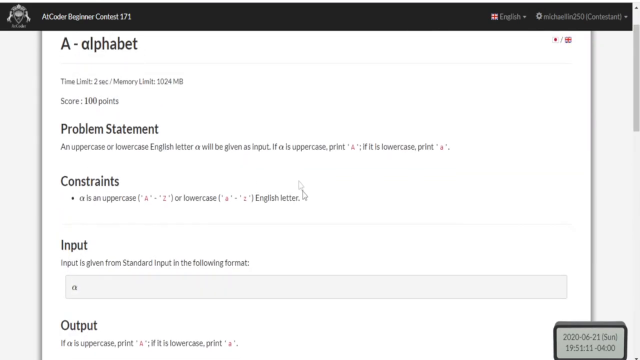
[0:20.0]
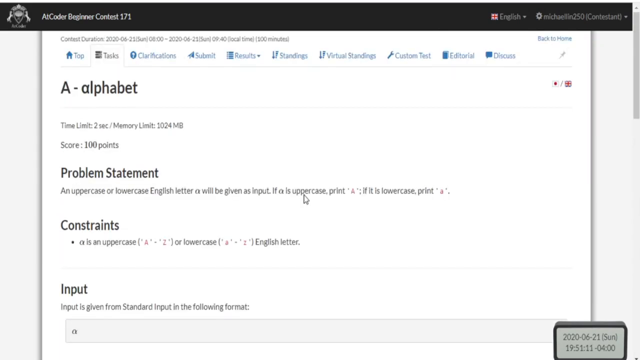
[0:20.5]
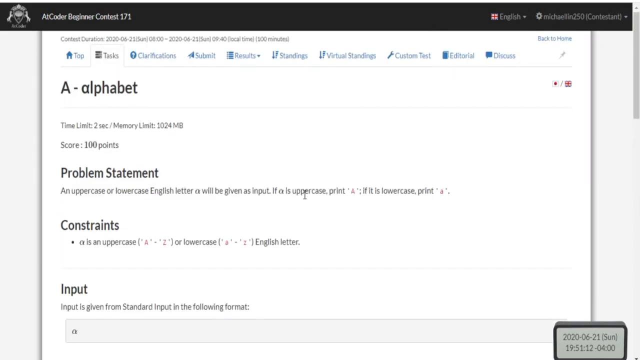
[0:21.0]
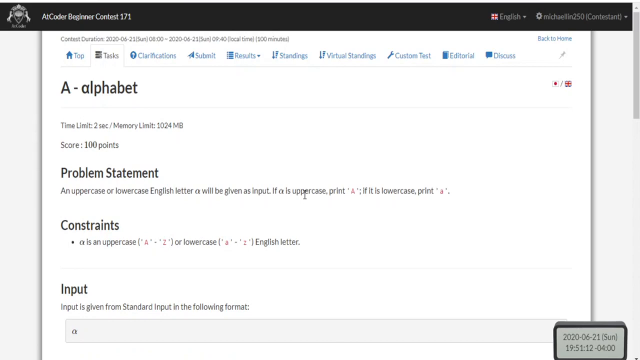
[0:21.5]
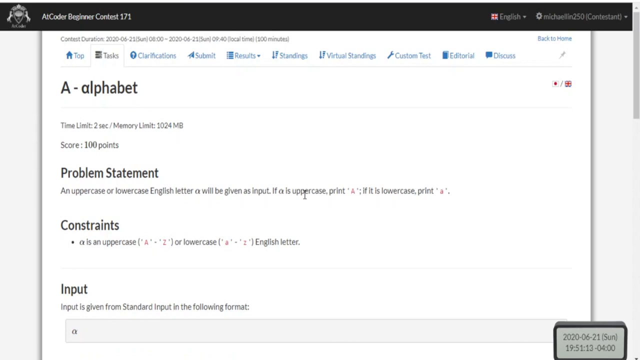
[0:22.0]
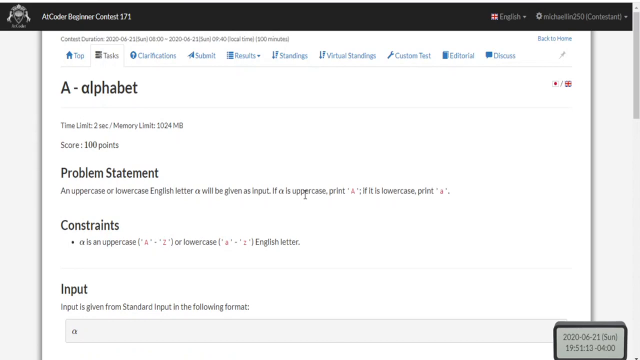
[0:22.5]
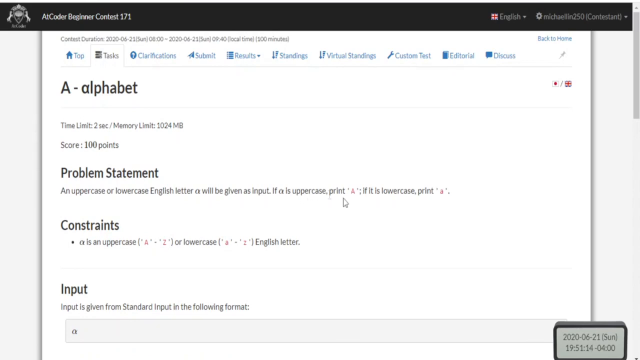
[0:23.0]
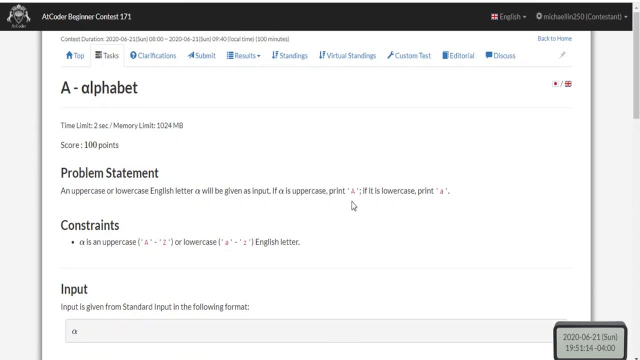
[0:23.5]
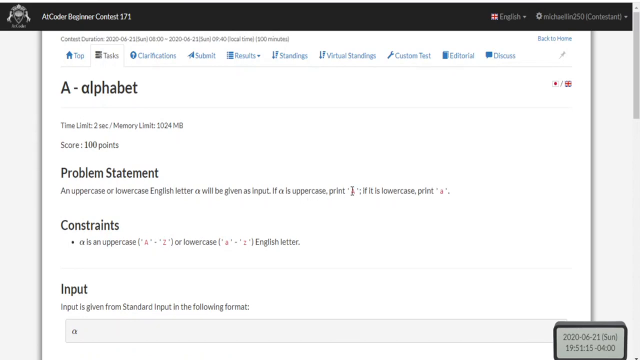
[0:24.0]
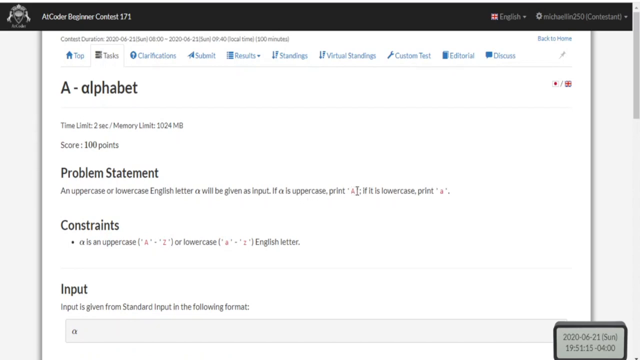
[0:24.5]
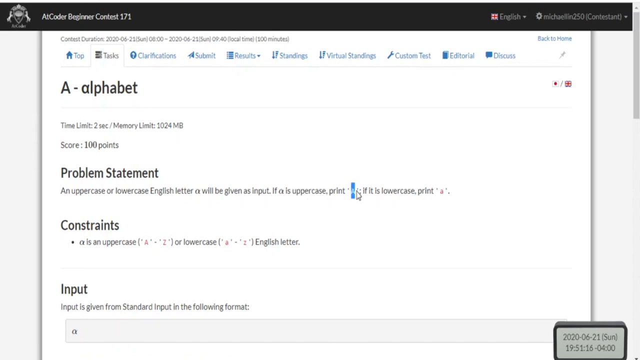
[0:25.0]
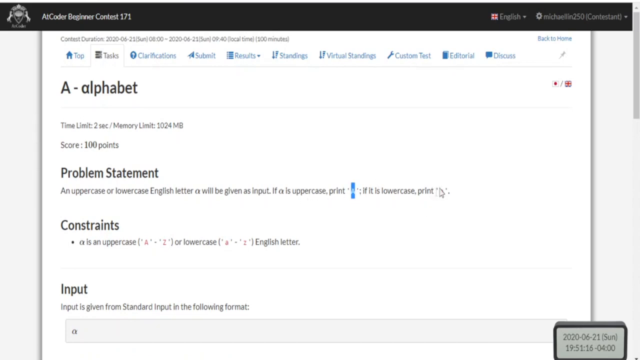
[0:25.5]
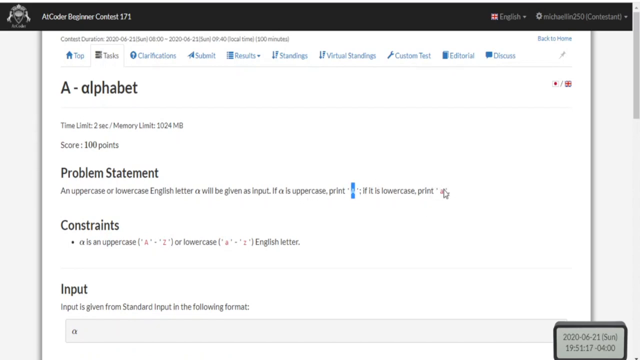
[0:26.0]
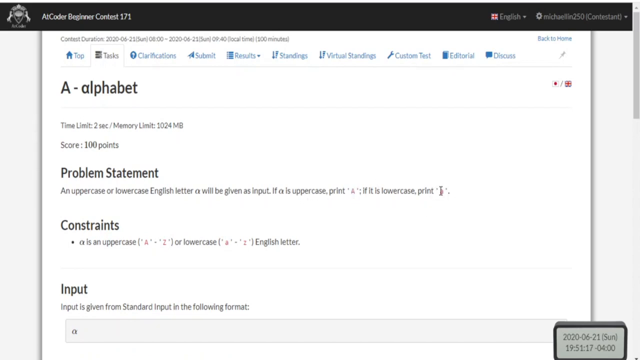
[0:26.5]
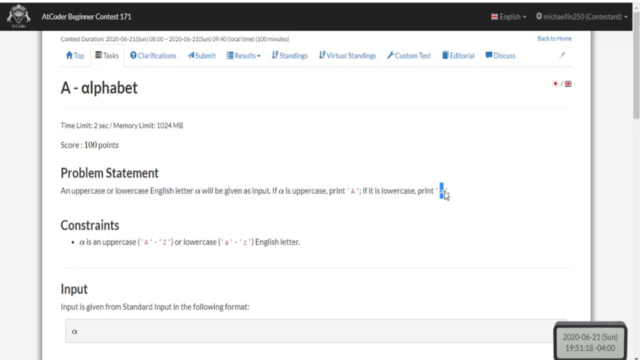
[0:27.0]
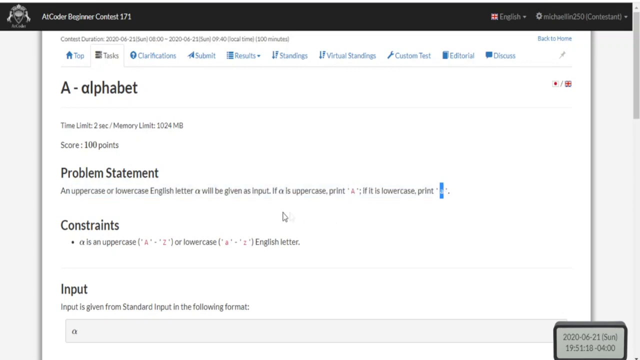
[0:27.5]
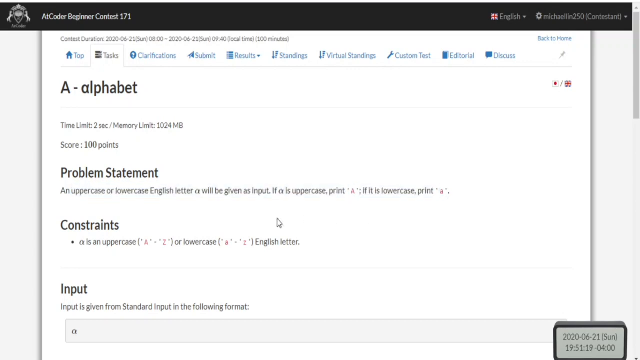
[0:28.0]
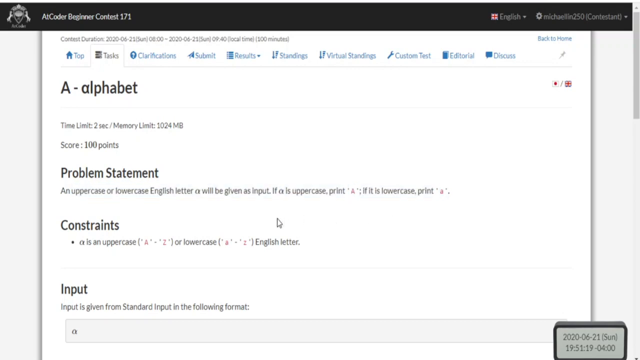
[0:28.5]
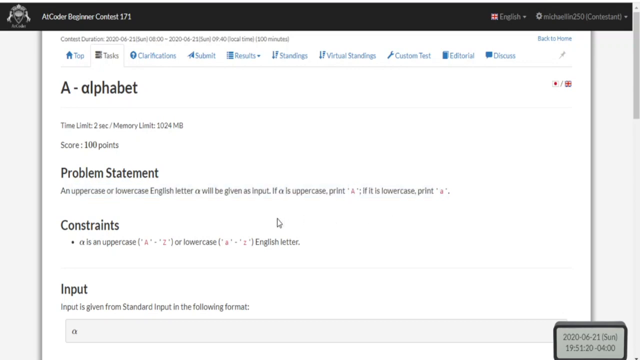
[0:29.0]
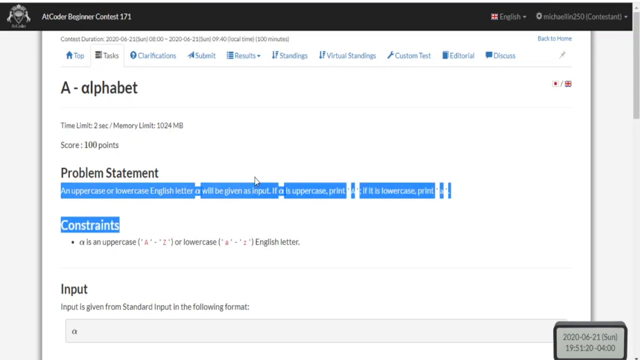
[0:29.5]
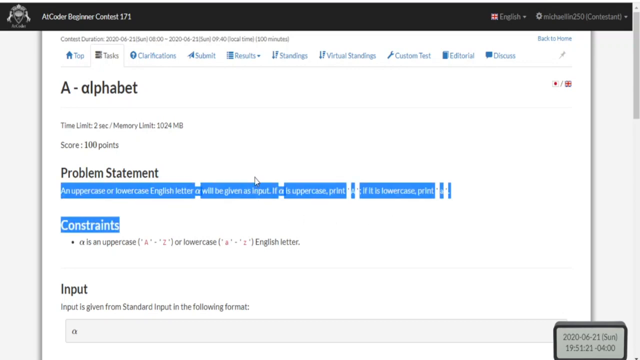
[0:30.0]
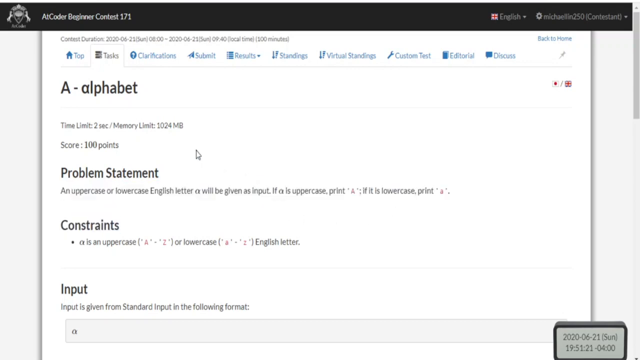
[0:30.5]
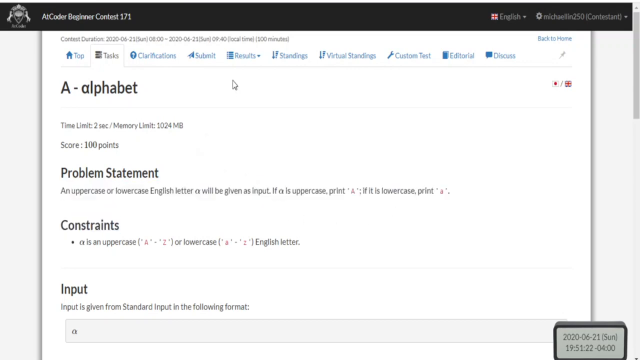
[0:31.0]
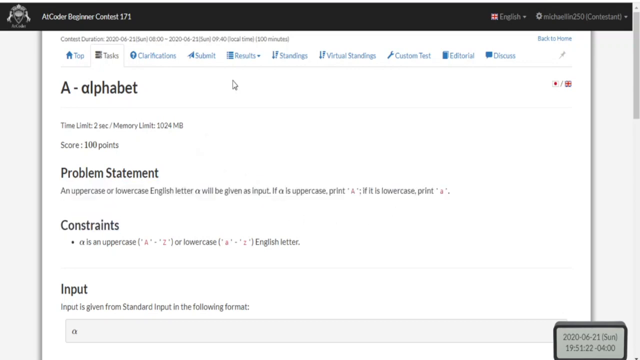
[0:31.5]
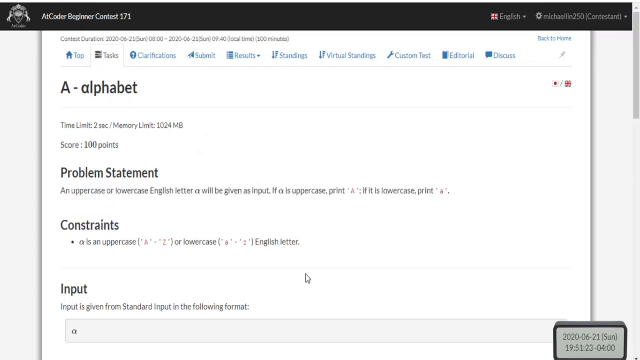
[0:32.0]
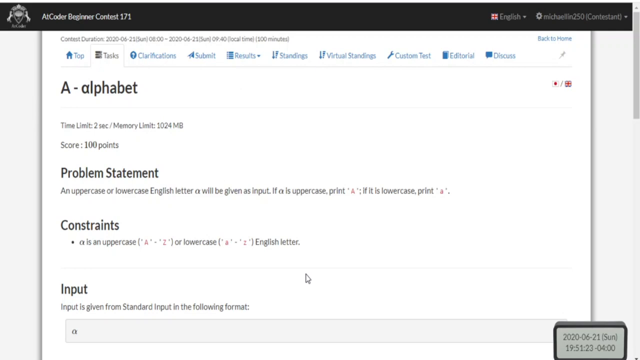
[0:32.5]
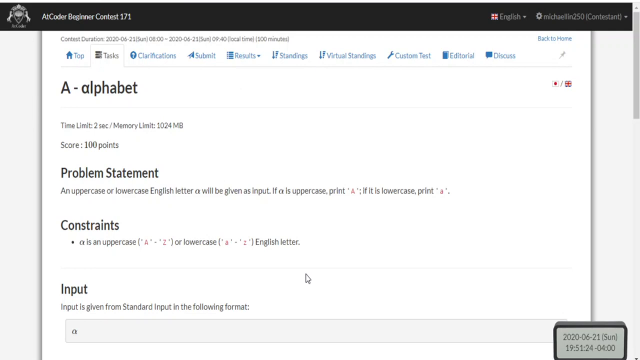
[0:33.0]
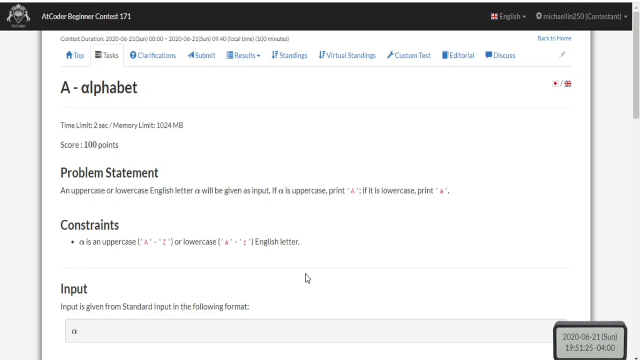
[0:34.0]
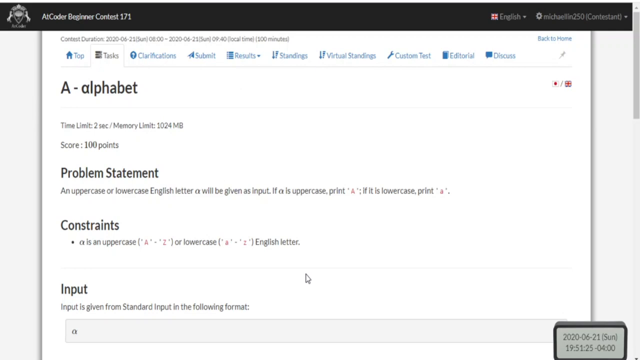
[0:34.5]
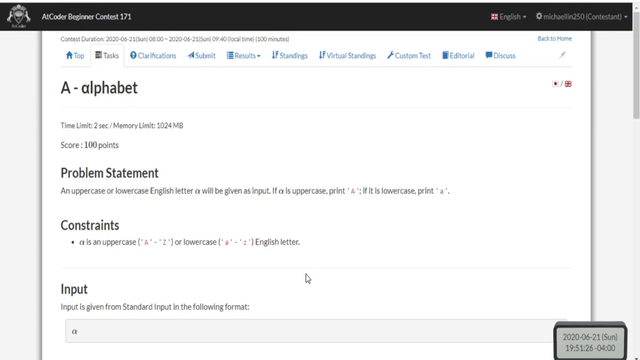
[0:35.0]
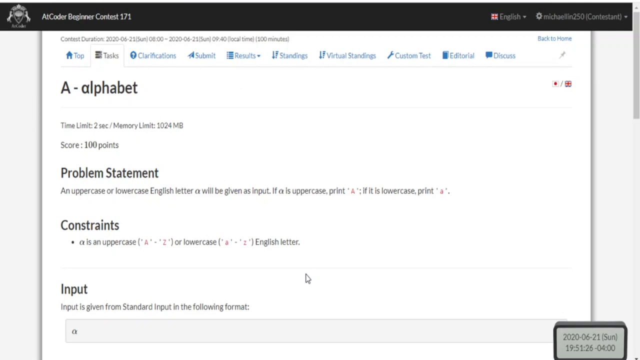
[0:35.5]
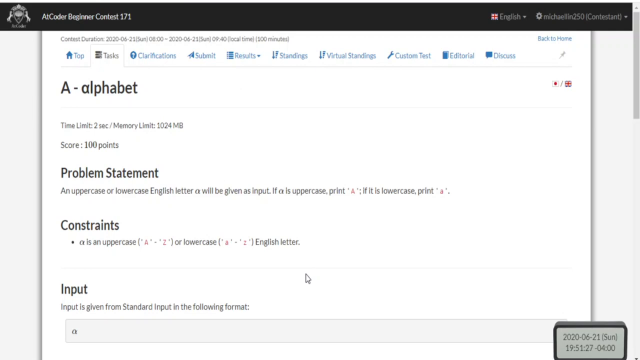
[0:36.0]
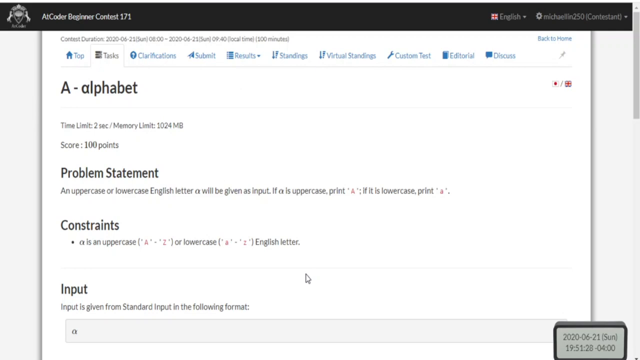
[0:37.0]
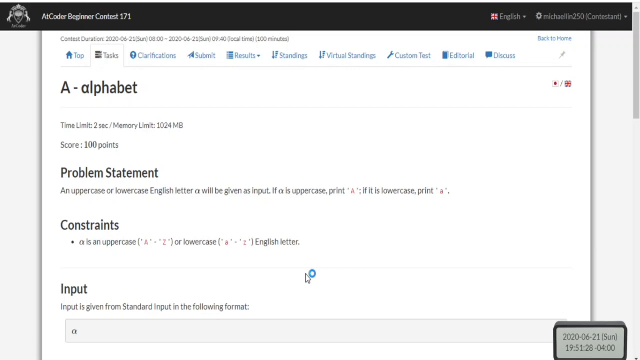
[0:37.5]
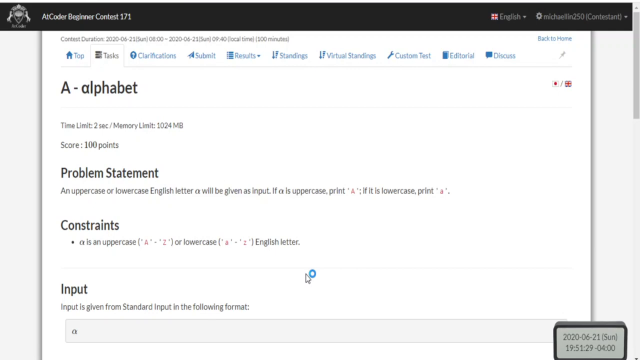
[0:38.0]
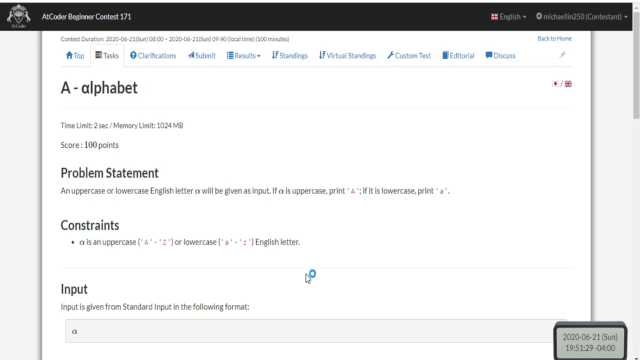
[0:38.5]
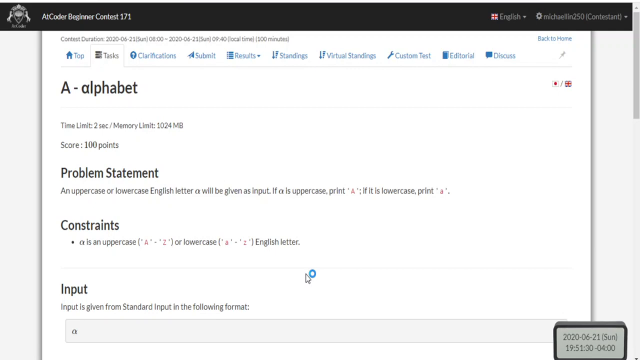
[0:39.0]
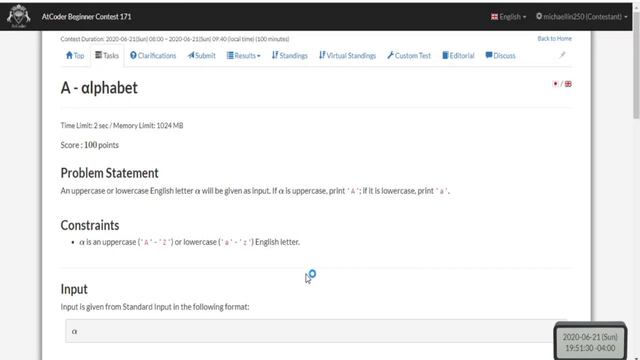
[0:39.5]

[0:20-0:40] A computer screen is shown in a video wider than it is tall. A black banner at the top reads "AI Coder Beginner Contest 171." On the right are a couple of drop-downs: one for the username on the far right and, to its left, one with English selected. Below is a white sheet of paper with a menu at the top of about ten tabs. Beneath that is the main text, looking like a standard sheet of paper, perhaps like an open Word document. In black text it reads: "A alphabet, time limit two seconds, memory limit 1024 megabytes, score 100 points, problem statement, an uppercase or lowercase English letter will be given as input. If A is uppercase, print A. If it is lowercase, print A. Constraints, A is an uppercase (A through Z), or lowercase (A through Z), English letter."